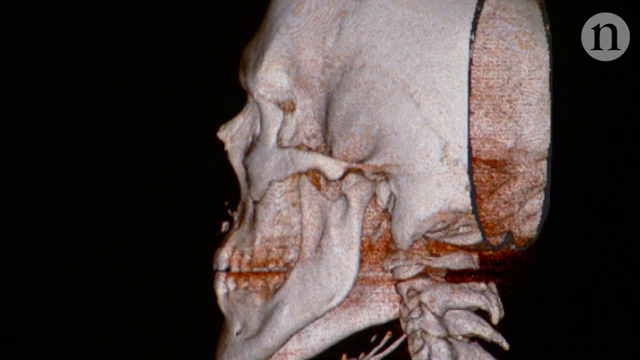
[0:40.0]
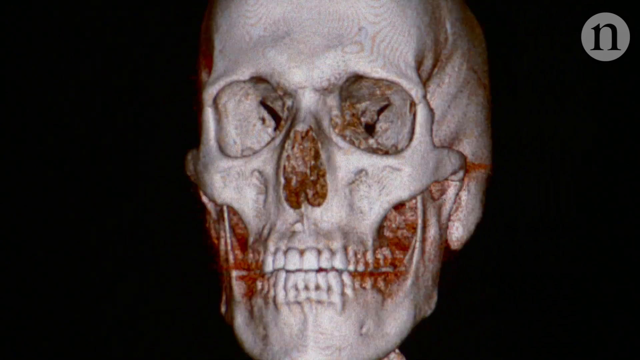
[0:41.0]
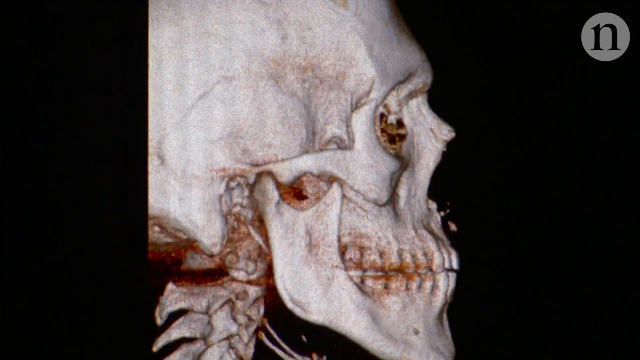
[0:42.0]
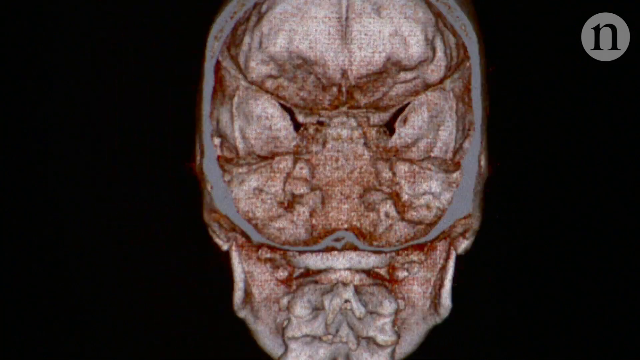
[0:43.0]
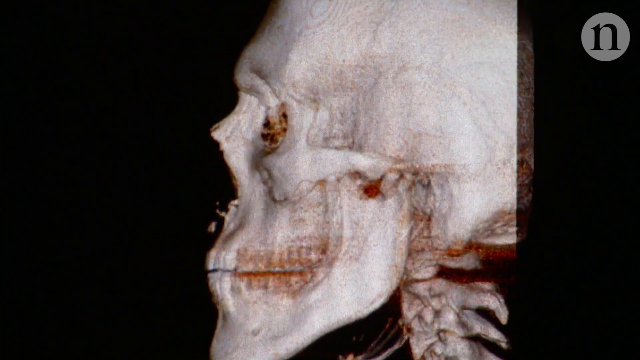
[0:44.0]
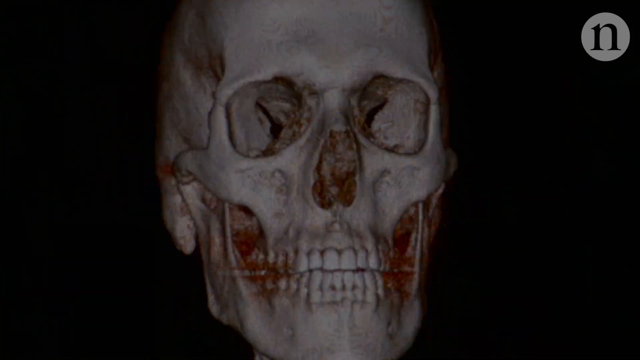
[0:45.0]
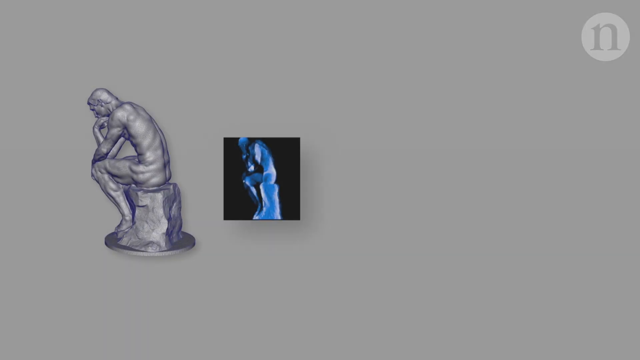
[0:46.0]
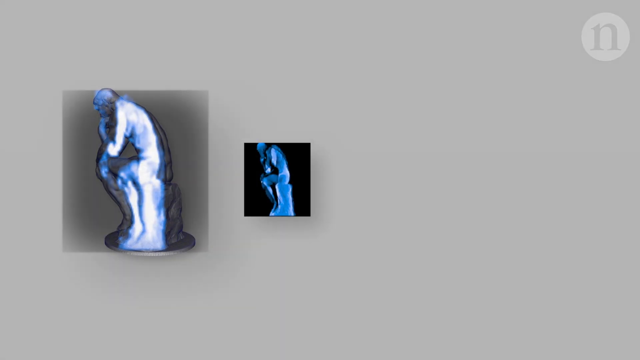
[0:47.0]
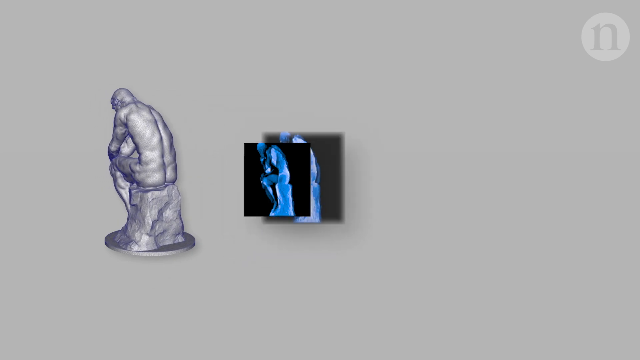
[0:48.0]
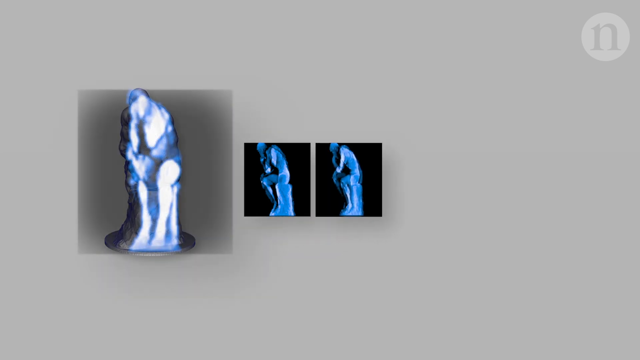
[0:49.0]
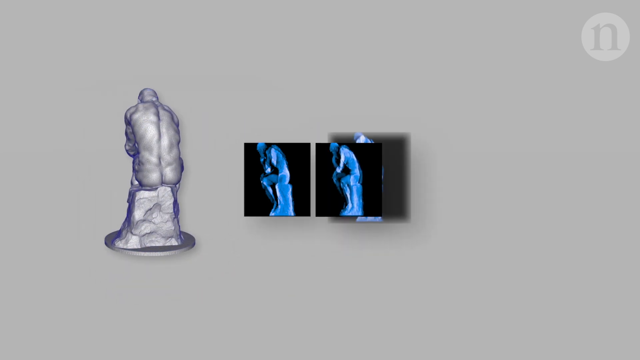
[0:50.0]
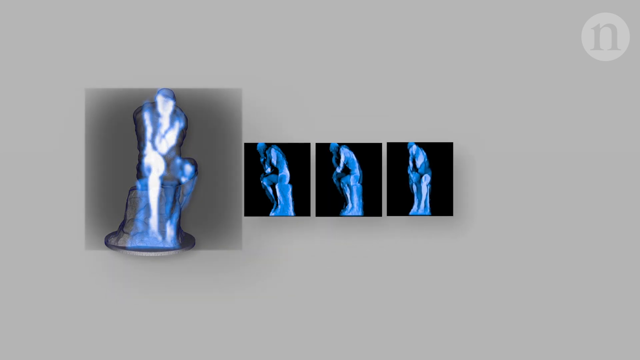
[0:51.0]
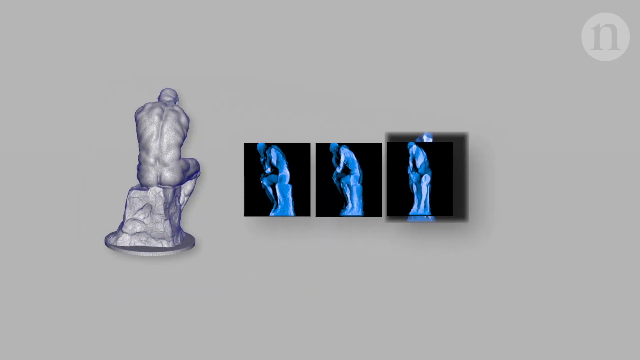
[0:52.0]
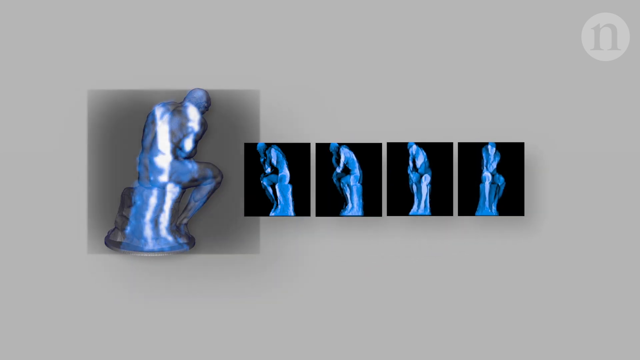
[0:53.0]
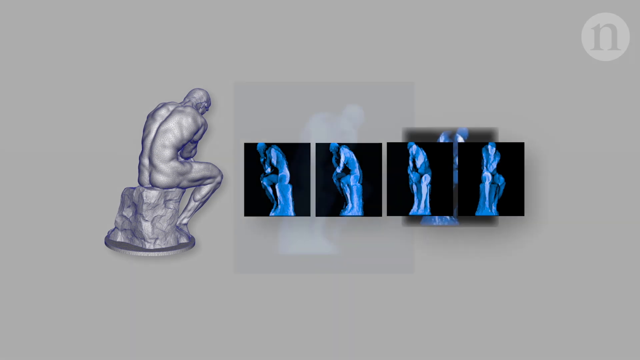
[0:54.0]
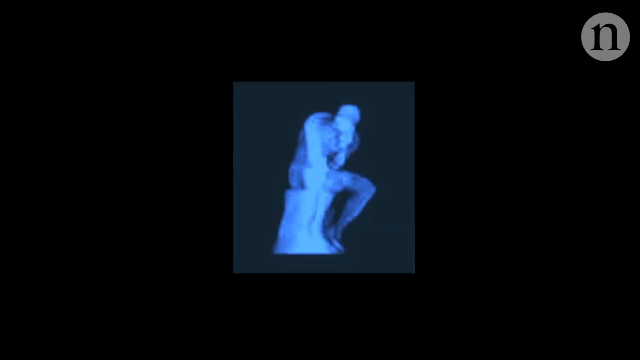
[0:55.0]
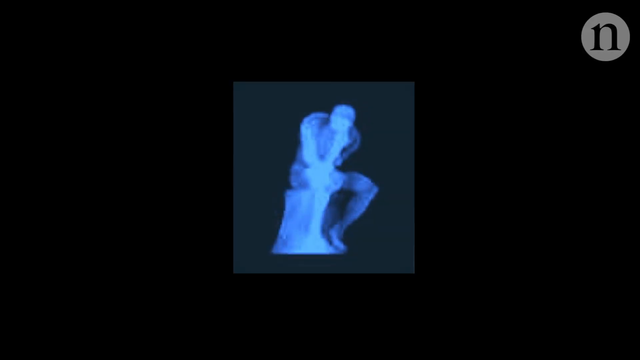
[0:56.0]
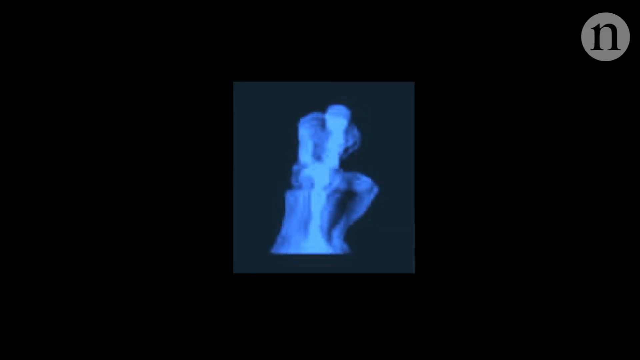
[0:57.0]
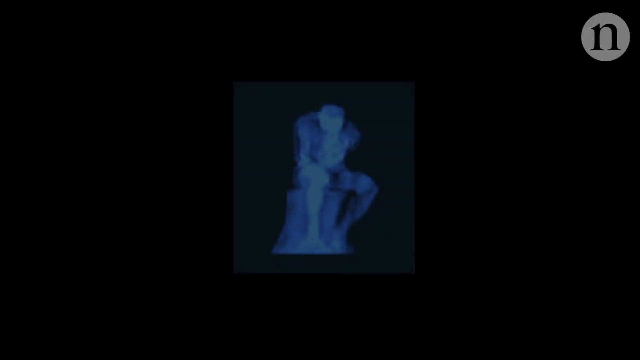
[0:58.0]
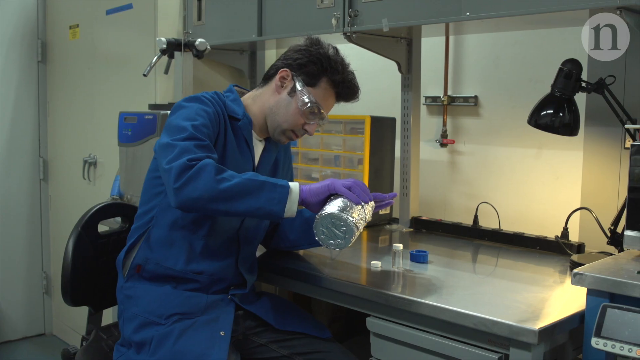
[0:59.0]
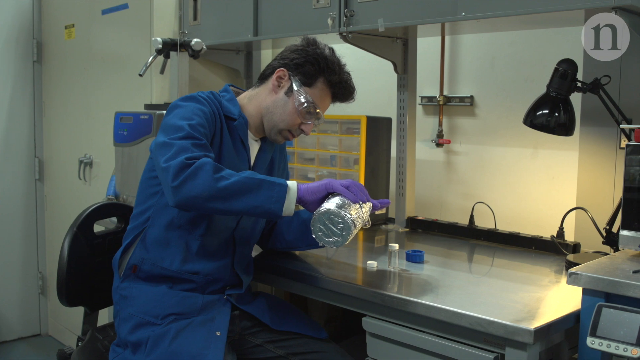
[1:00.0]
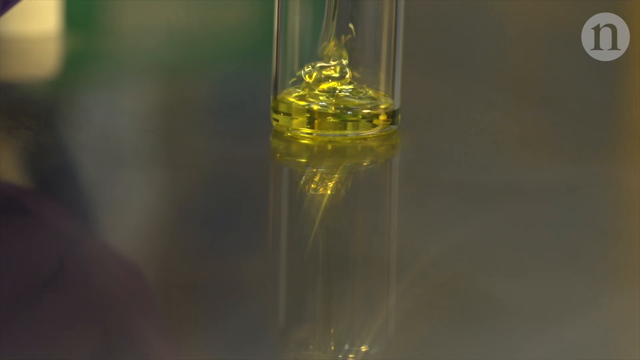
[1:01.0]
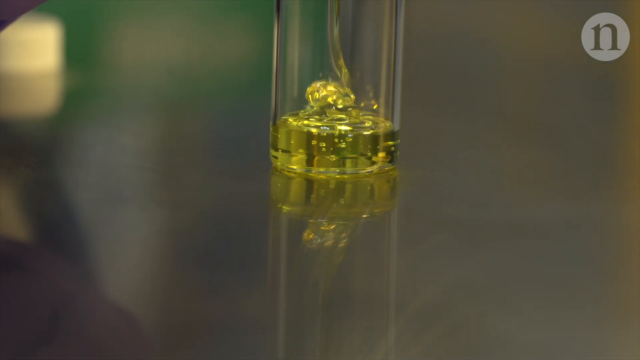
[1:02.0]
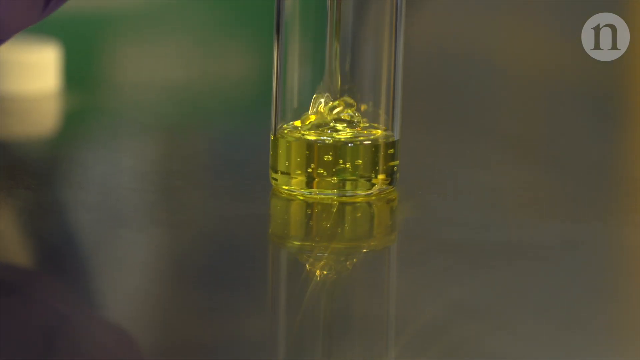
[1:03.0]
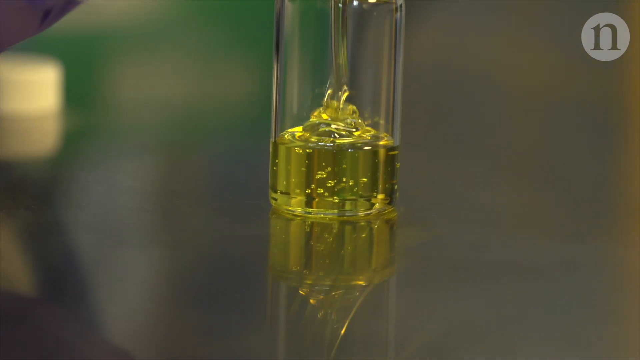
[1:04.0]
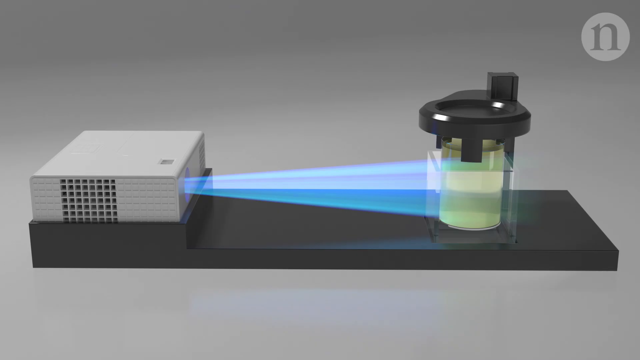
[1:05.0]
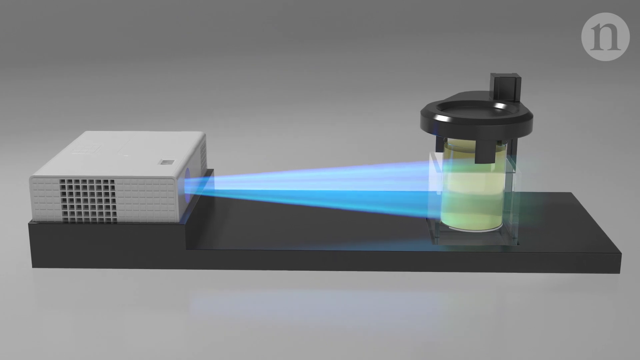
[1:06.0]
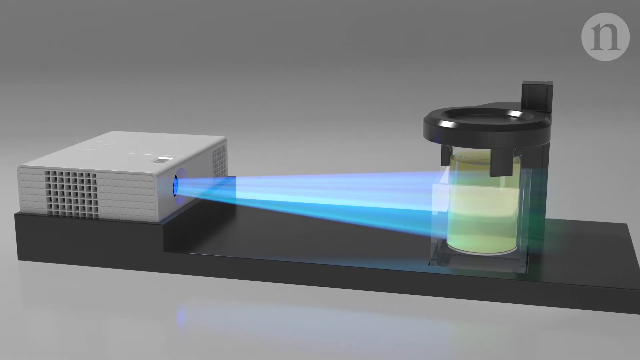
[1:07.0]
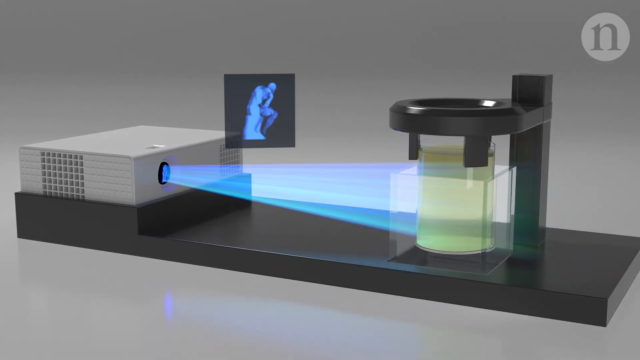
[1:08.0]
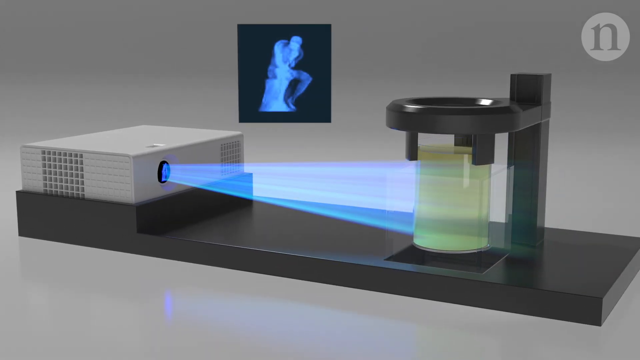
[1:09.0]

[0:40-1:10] Half of a head is shown: the front part of the head, with the back part broken. Next, a human body rotates, with pictures from different sides. Then, in a lab, a person takes some liquid in a small bottle. After that, what seems to be a very strong light is directed toward a bottle of liquid.